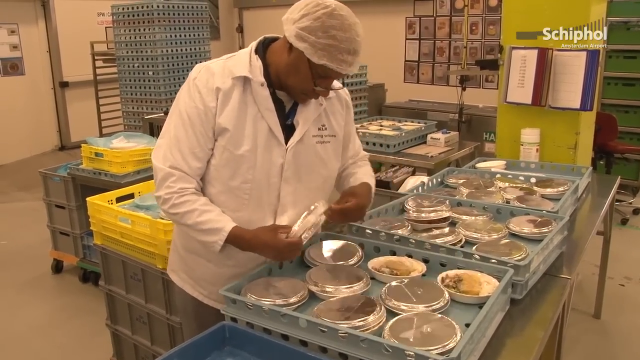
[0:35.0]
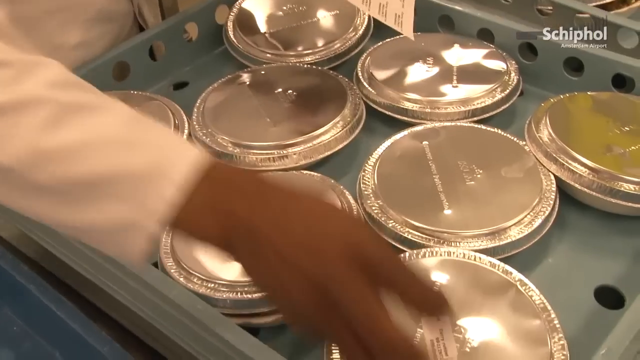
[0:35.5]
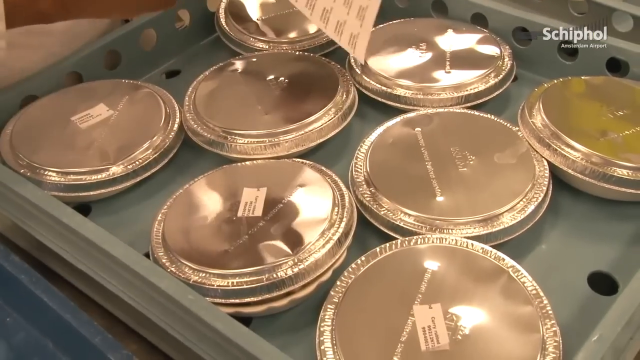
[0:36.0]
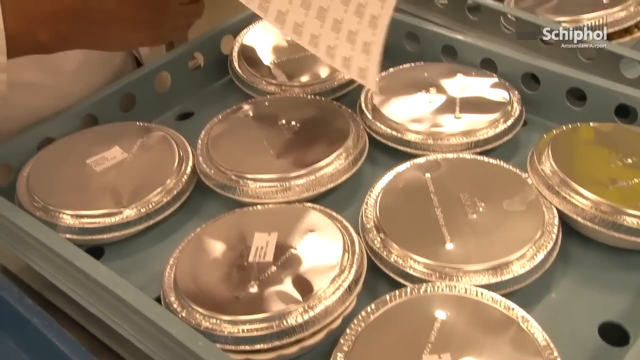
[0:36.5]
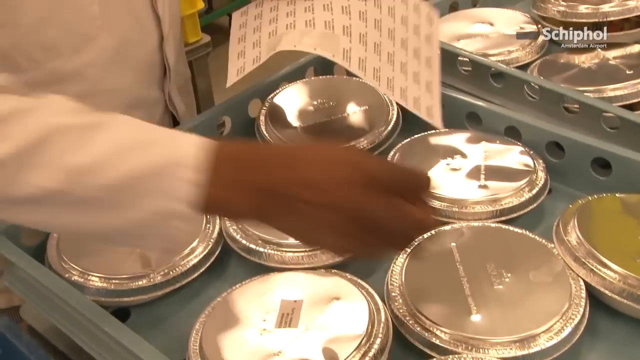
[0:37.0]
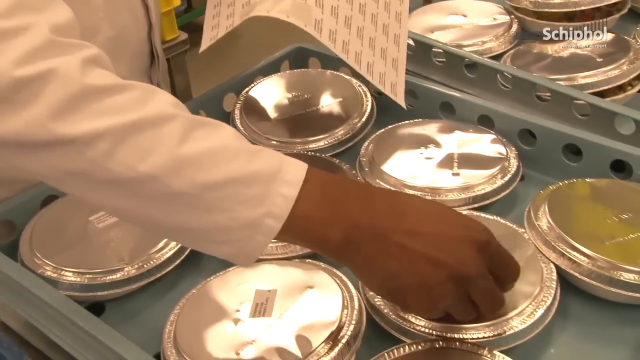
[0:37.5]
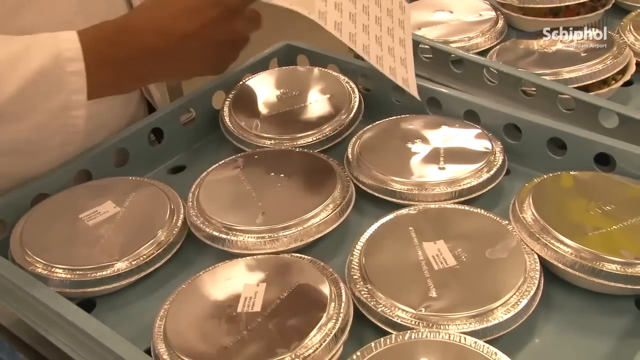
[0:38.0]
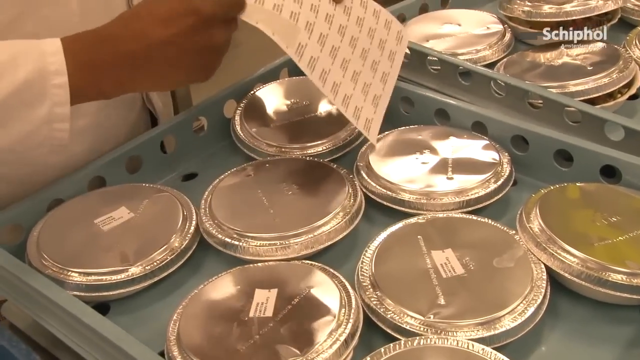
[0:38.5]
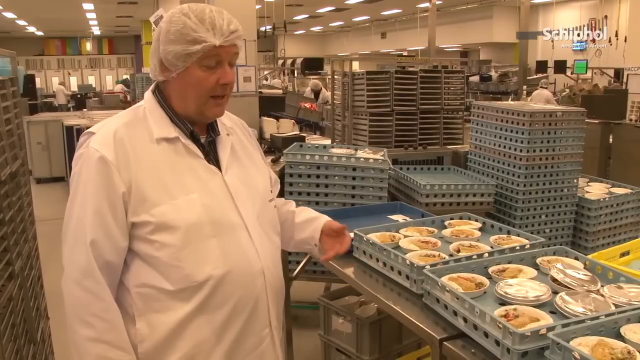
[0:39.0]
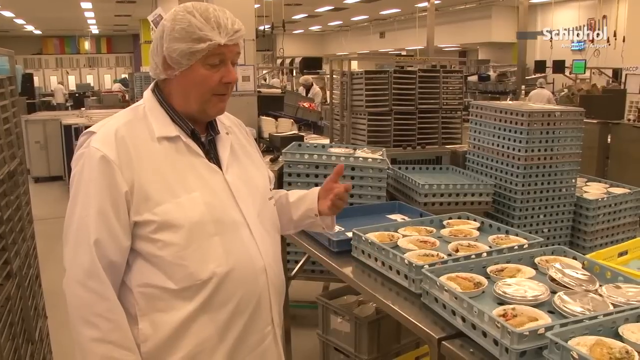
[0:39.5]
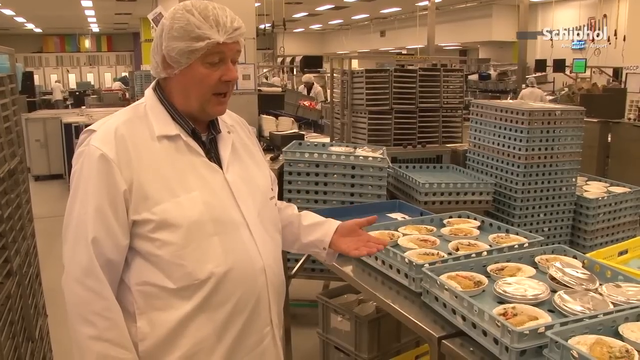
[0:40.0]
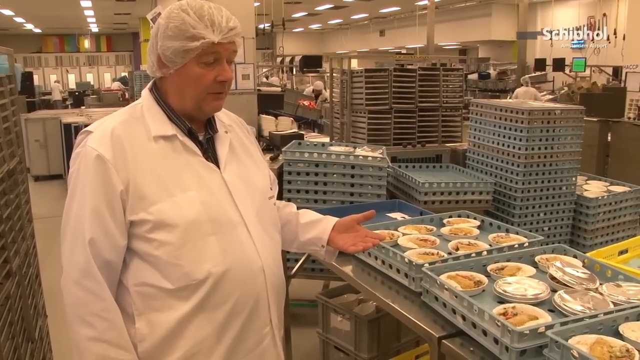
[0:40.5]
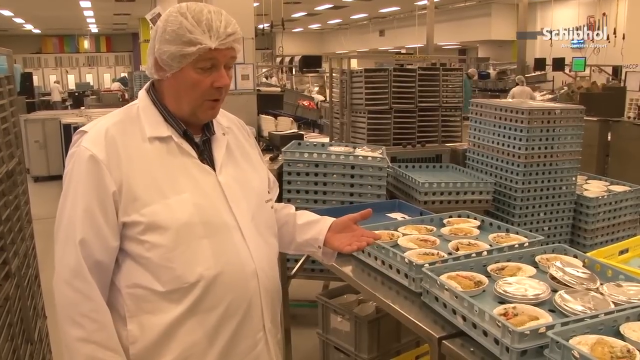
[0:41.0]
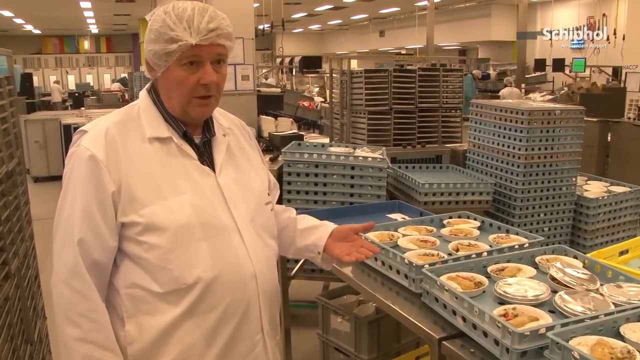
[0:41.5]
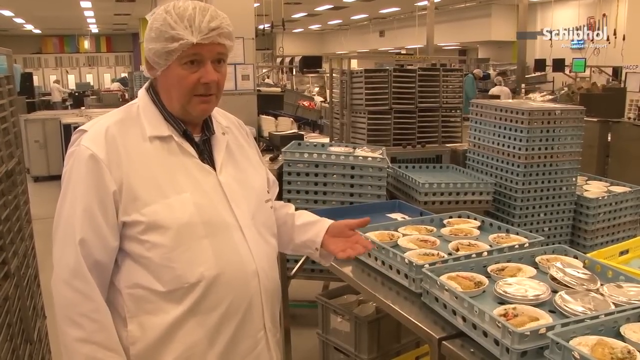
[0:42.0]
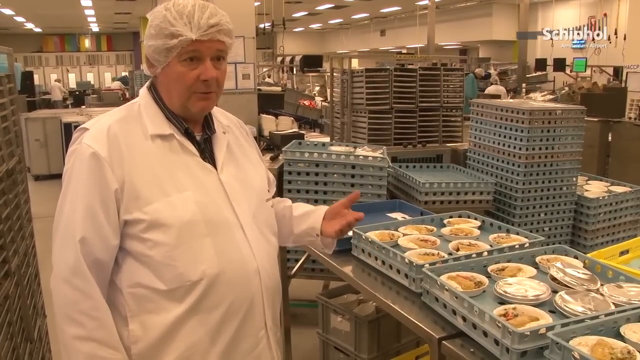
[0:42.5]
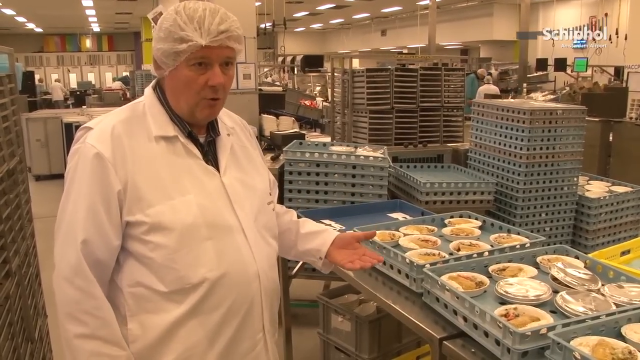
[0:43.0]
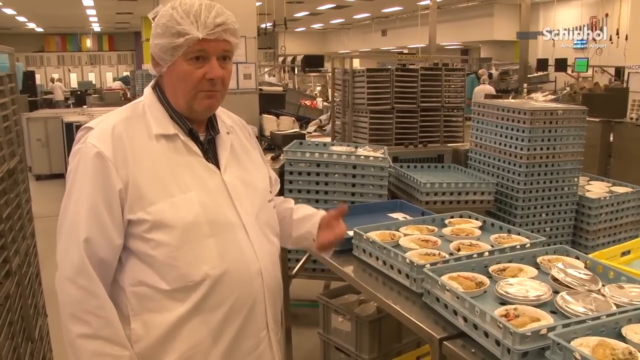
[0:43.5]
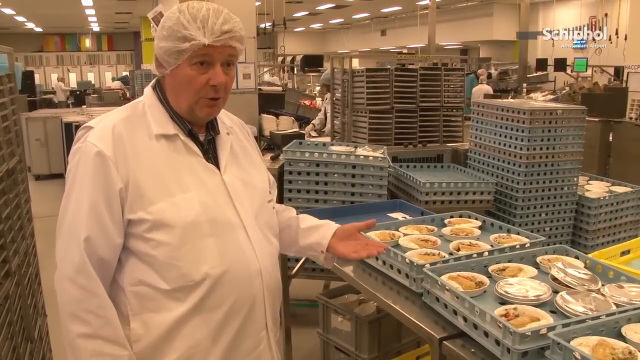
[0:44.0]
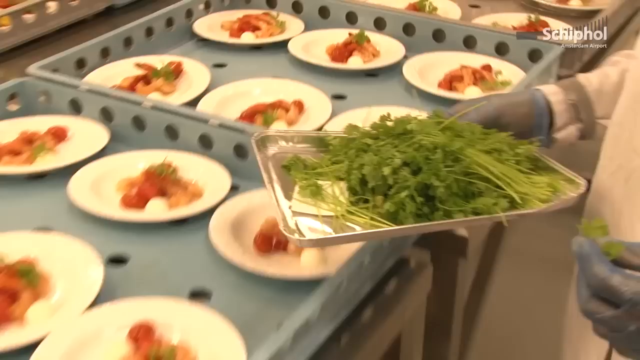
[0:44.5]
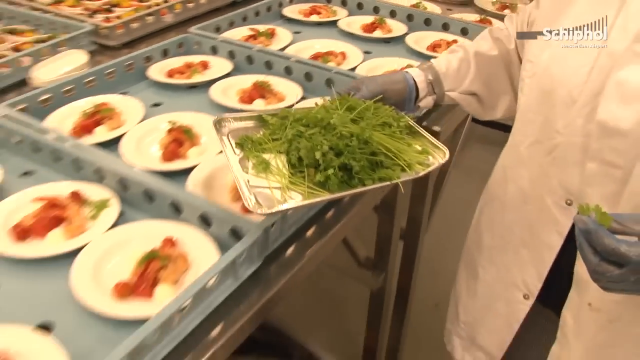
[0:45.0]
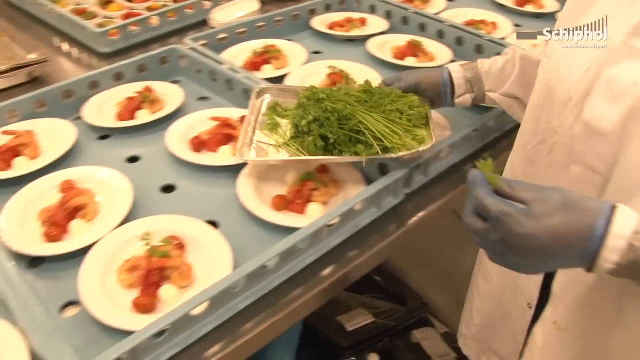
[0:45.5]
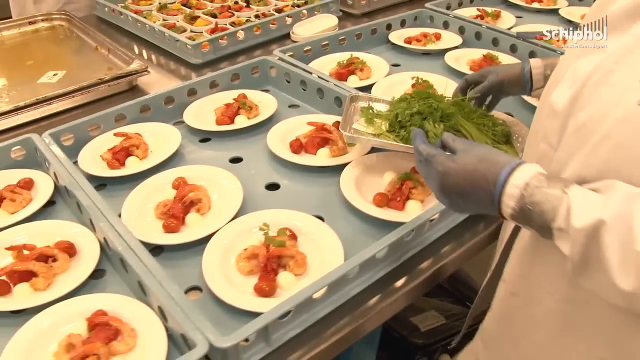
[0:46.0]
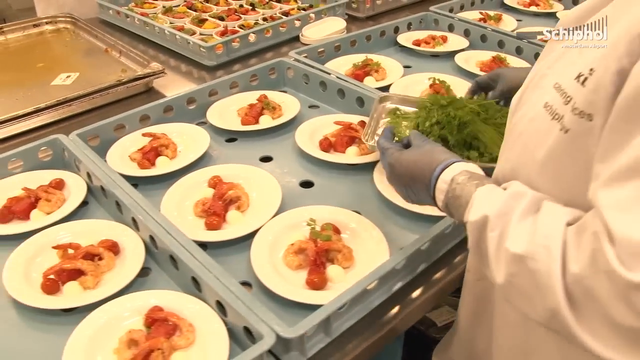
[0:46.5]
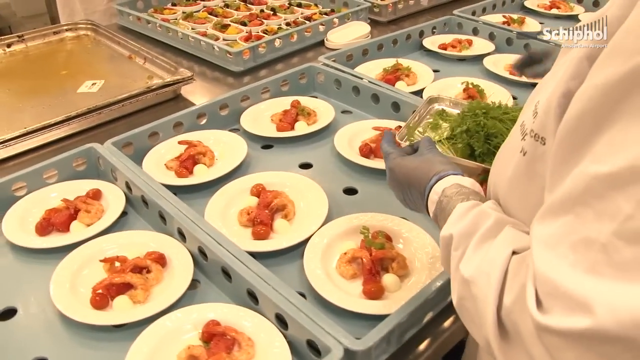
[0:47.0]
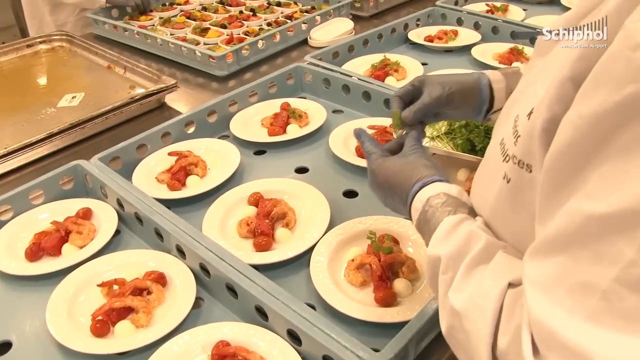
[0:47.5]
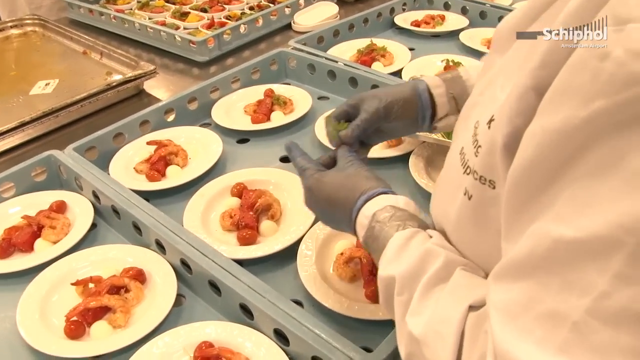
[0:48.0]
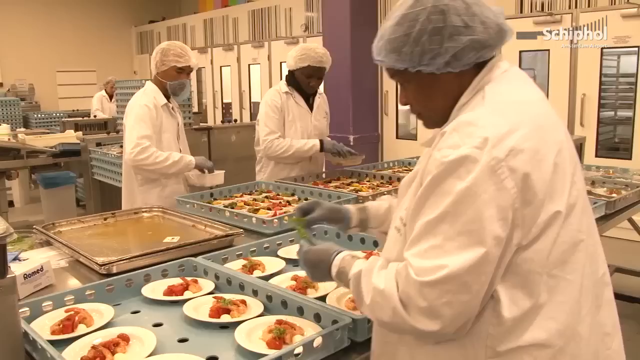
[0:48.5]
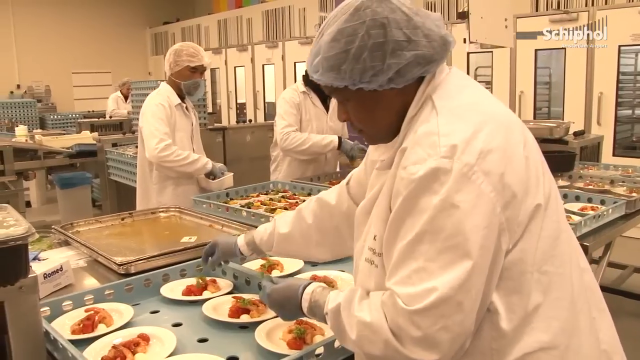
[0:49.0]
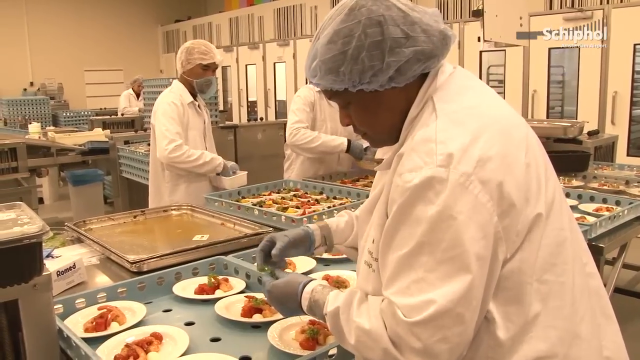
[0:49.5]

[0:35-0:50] The chef is talking, wearing a white head covering, a hairnet and a white chef's jacket. He is in front of trays of food: white plates of food on blue trays. In another shot, a chef puts items onto these plates, apparently a garnish added to each one. Next, a chef puts a plastic lid on each plate on the trays and then affixes a sticker or label to each plastic top to identify what is underneath. There appear to be about six or eight plates in each tray. One dish appears to be maybe some sort of schnitzel or hot dog with some food on top of it, and different trays hold different kinds of food.